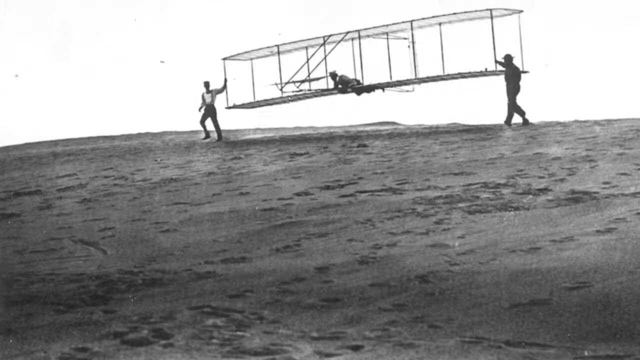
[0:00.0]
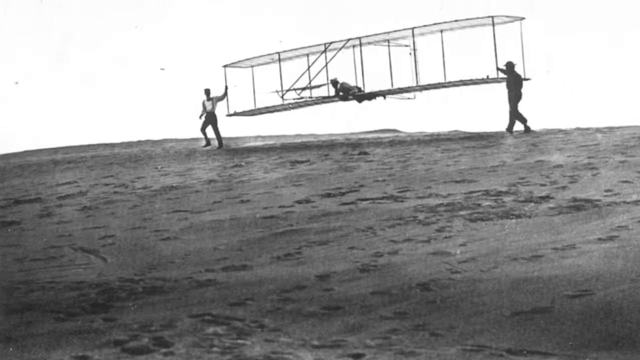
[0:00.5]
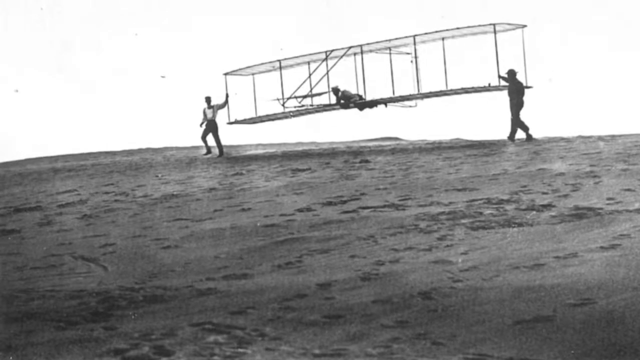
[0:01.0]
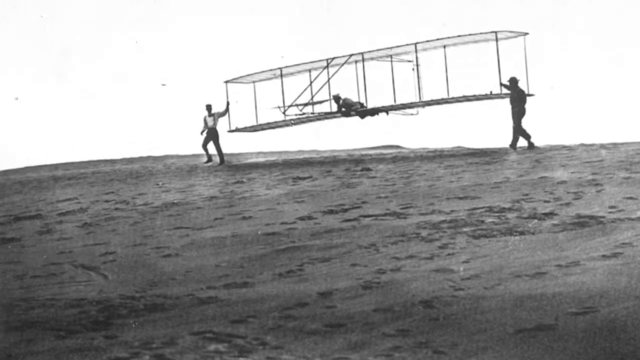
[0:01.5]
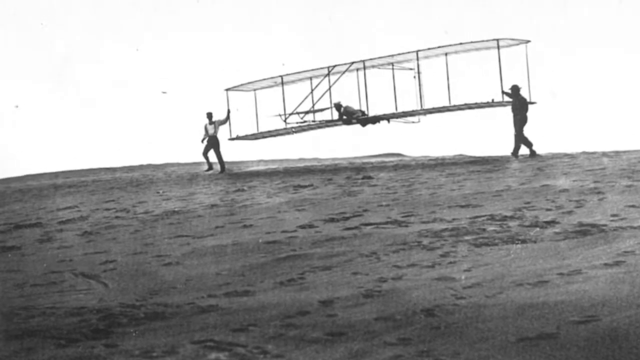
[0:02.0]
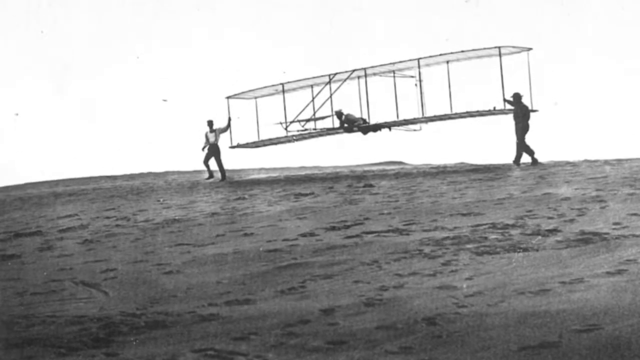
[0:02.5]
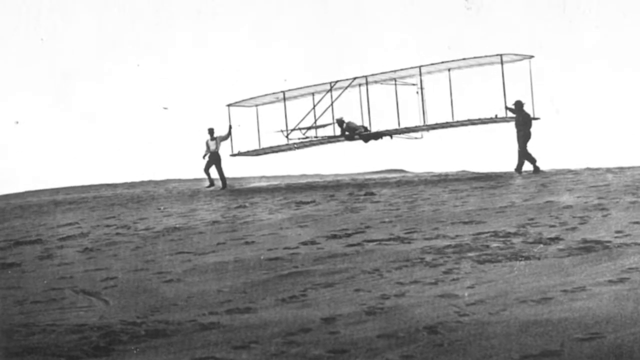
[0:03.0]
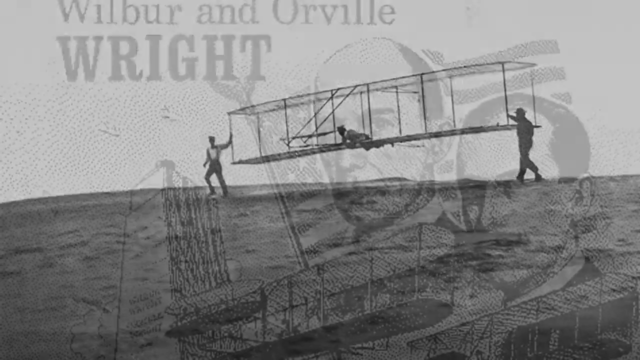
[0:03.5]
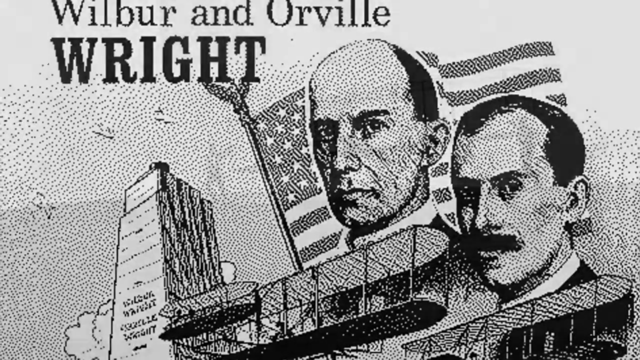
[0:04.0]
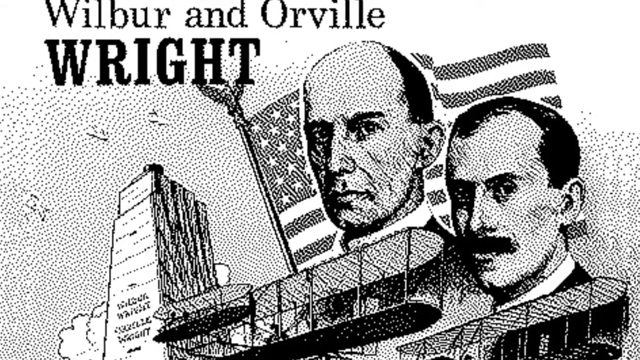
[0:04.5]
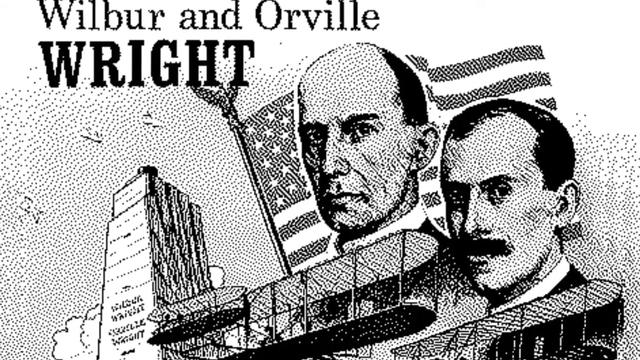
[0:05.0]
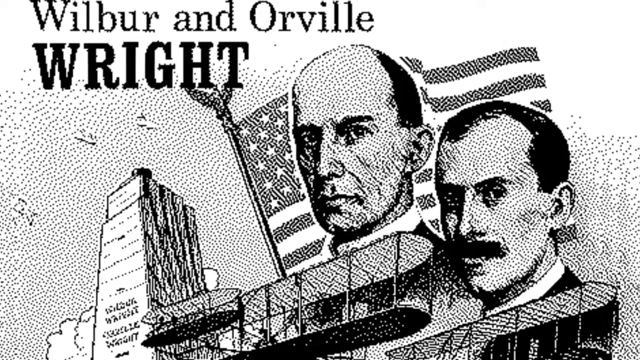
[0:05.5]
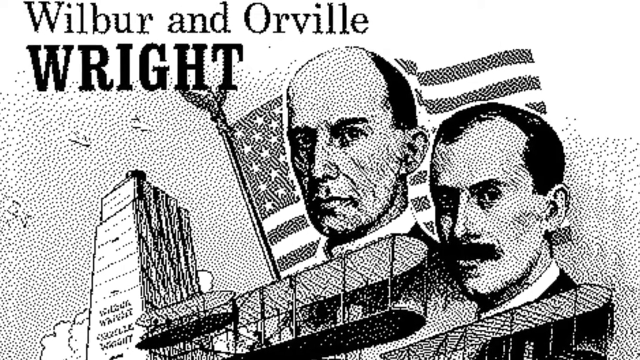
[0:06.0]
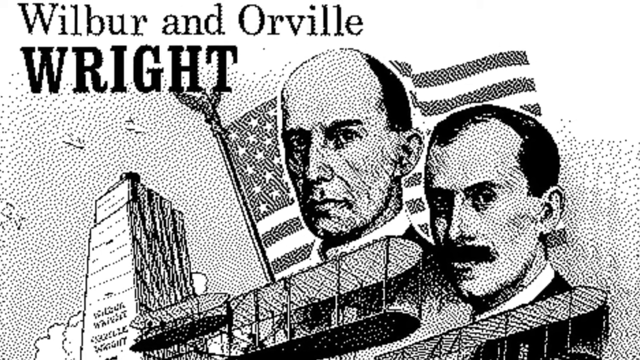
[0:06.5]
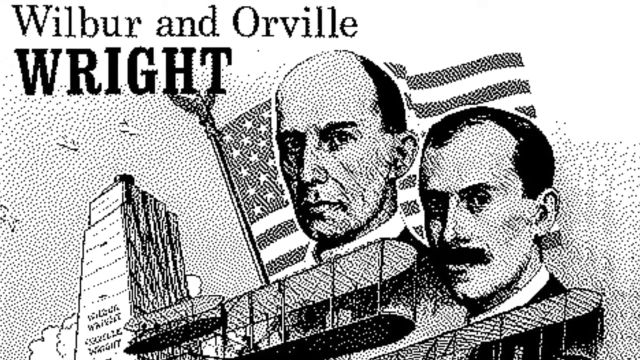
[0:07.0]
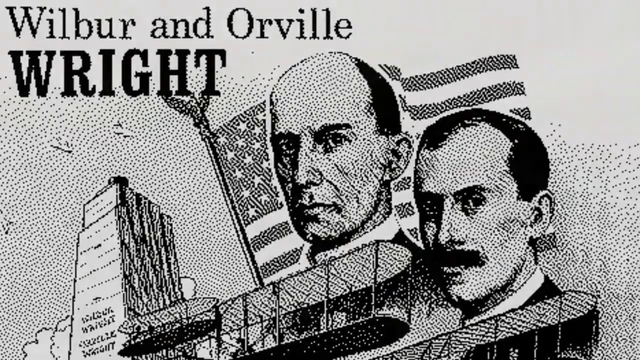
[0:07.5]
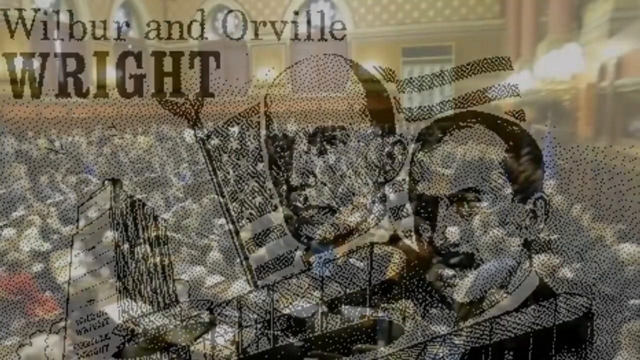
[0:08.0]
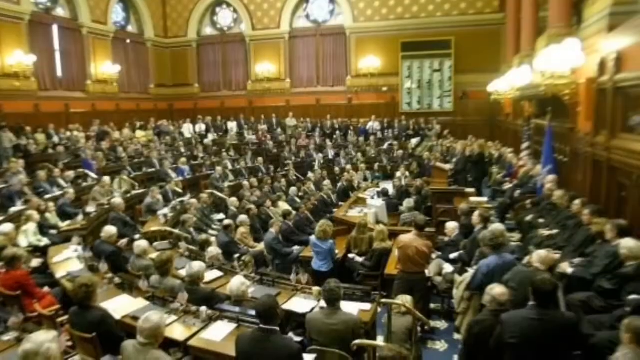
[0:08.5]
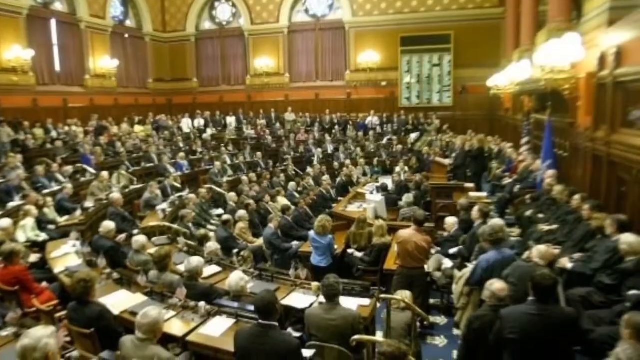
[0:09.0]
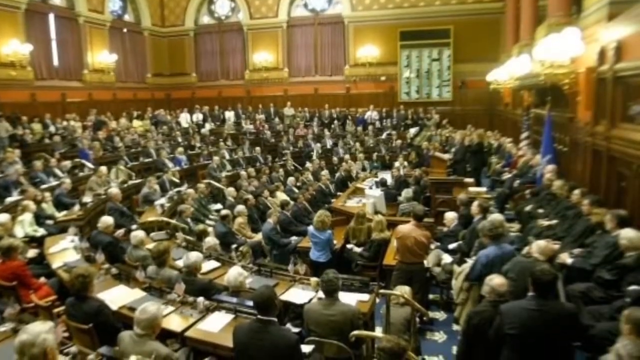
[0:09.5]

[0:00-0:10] One of the first pieces of equipment built to learn how to fly is shown. A pilot is lying on his stomach in the middle of the plane, and men at each end of the plane run to get it to work and move.